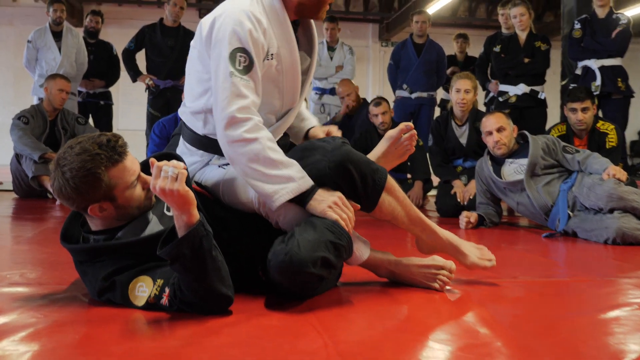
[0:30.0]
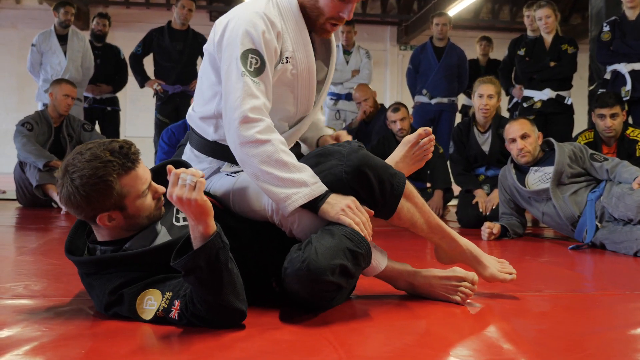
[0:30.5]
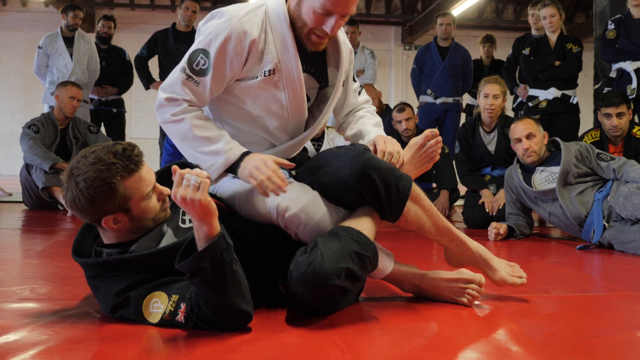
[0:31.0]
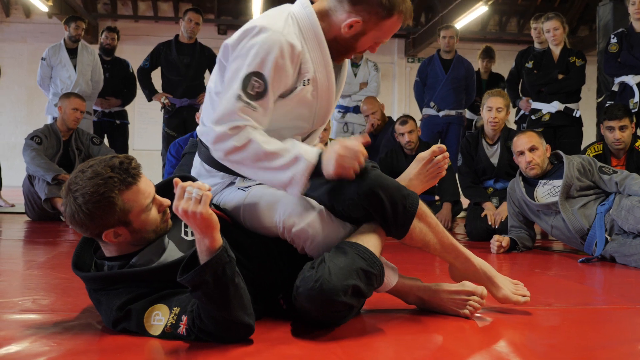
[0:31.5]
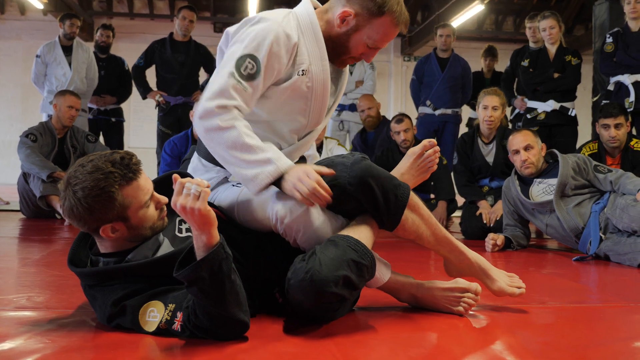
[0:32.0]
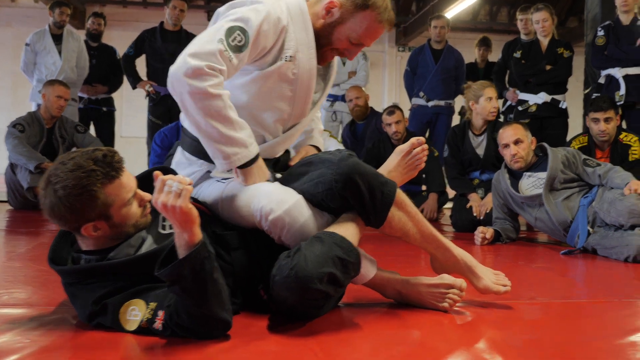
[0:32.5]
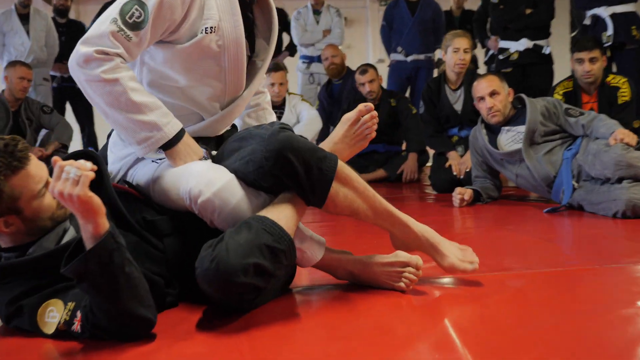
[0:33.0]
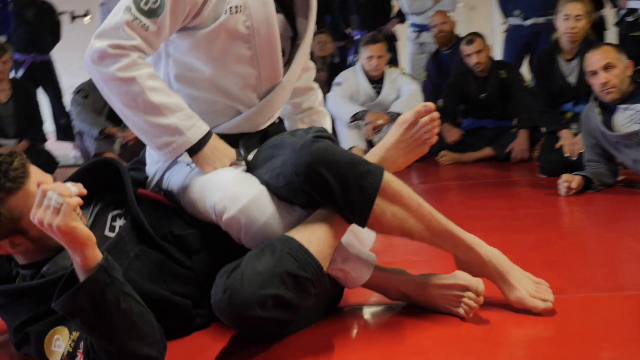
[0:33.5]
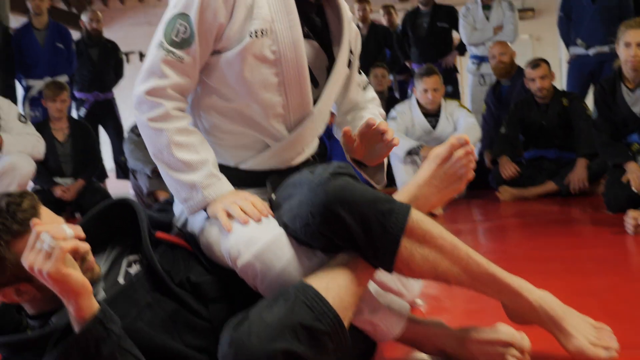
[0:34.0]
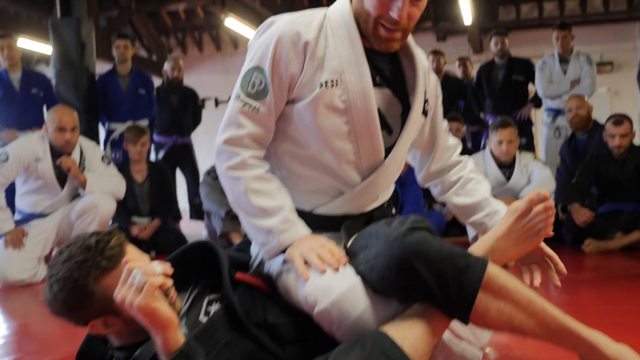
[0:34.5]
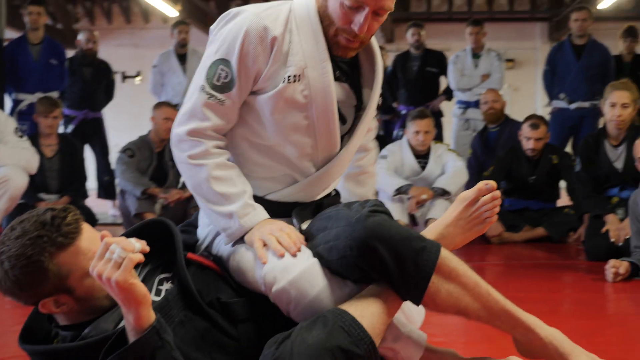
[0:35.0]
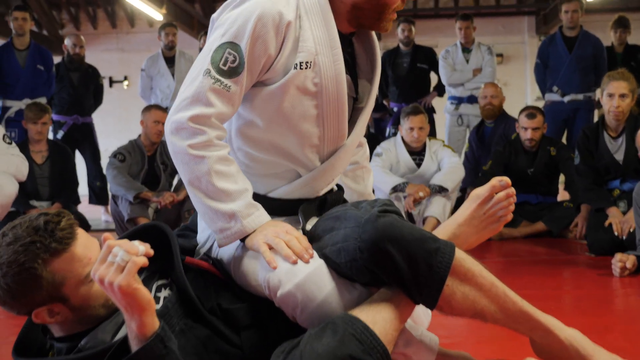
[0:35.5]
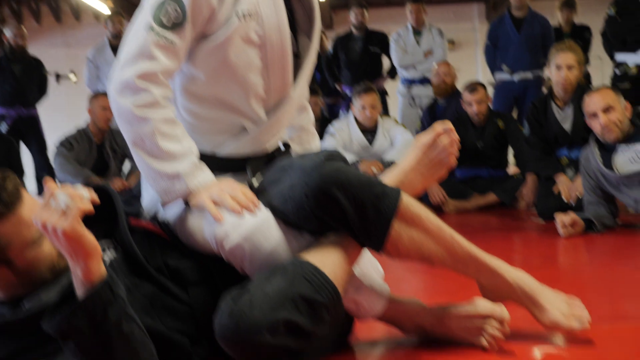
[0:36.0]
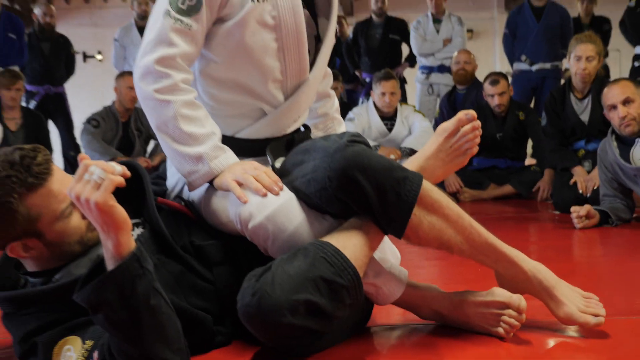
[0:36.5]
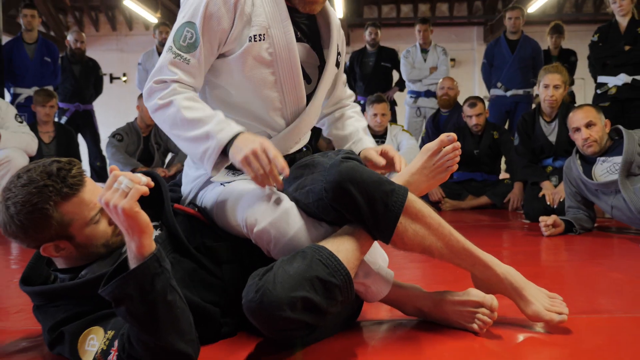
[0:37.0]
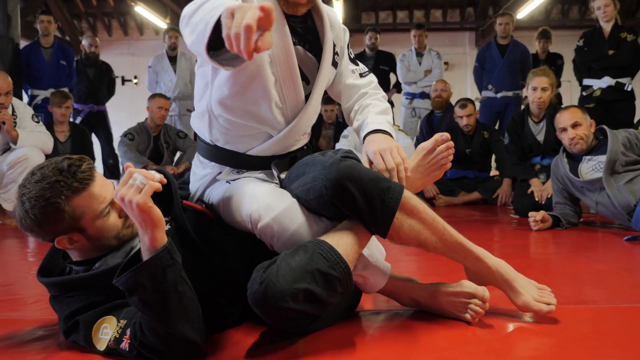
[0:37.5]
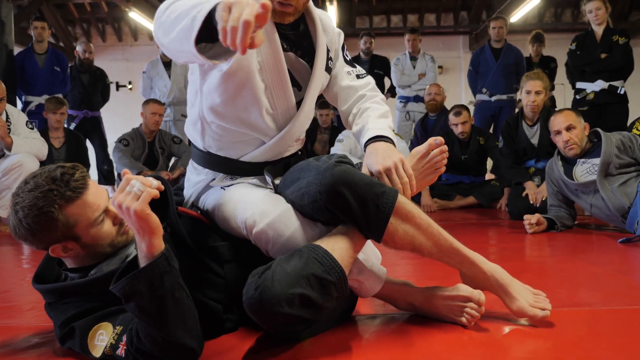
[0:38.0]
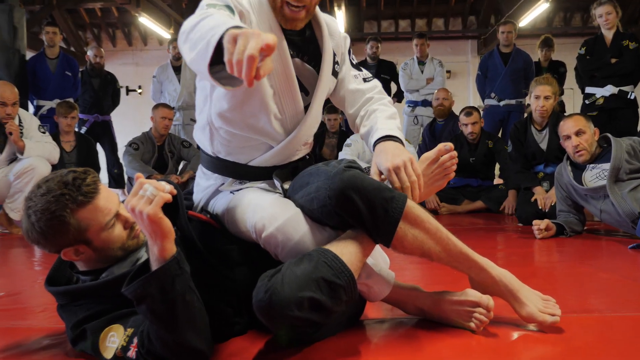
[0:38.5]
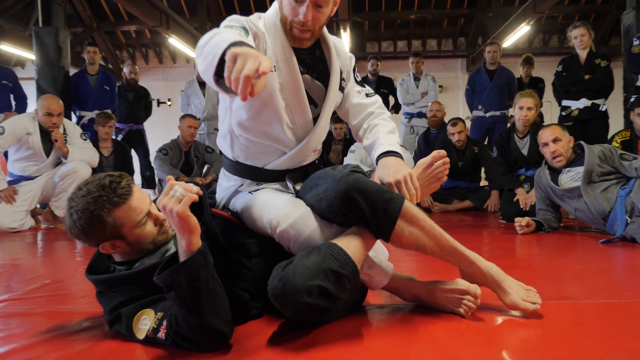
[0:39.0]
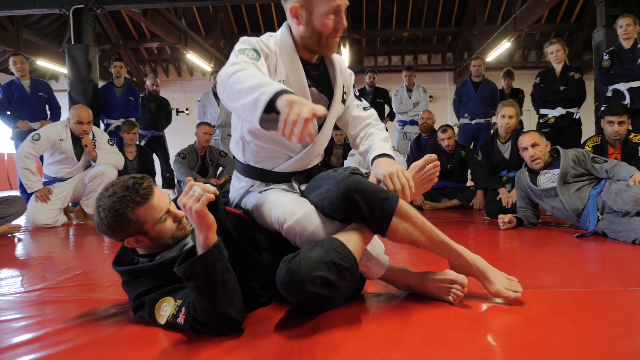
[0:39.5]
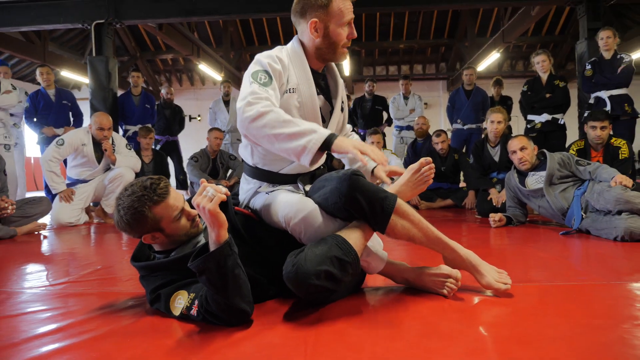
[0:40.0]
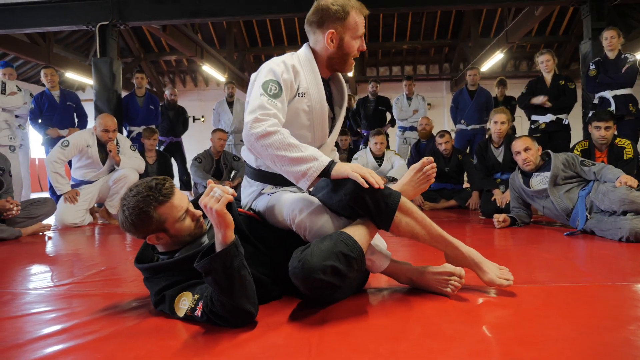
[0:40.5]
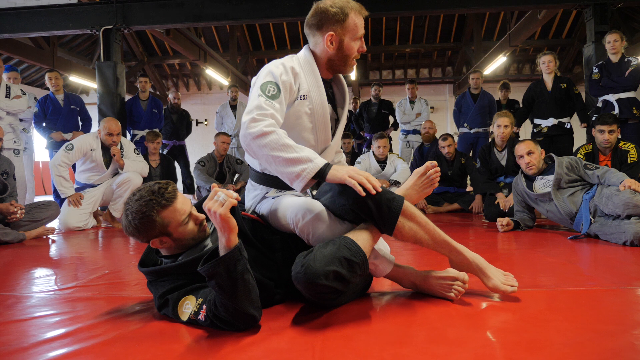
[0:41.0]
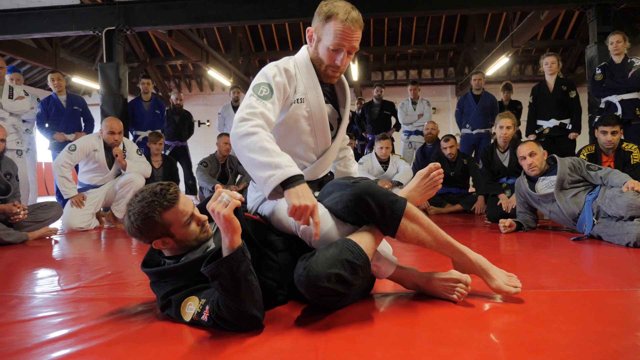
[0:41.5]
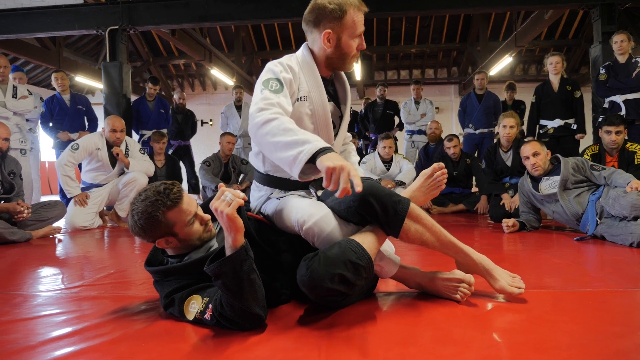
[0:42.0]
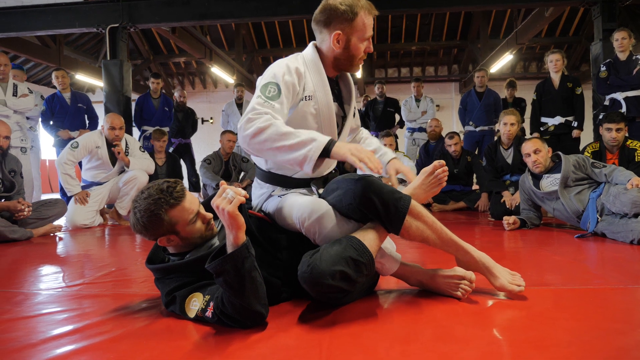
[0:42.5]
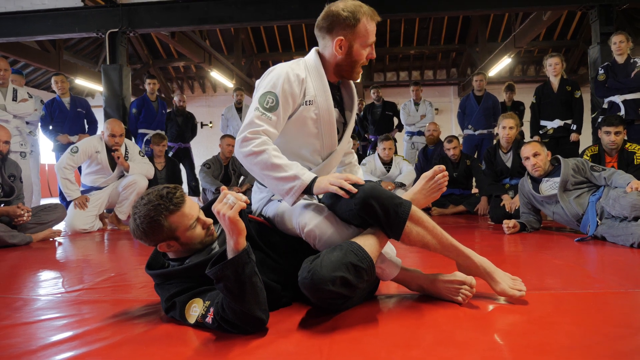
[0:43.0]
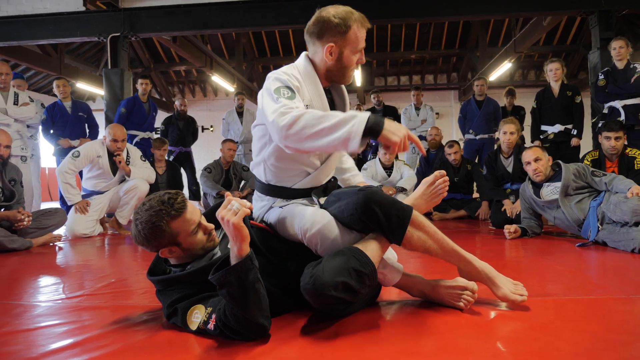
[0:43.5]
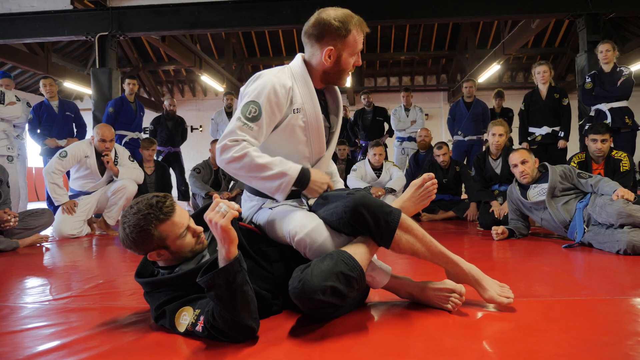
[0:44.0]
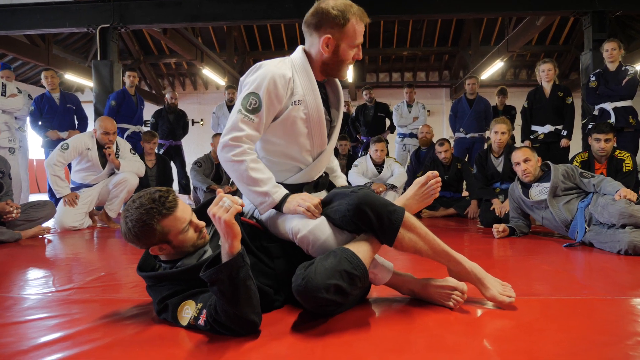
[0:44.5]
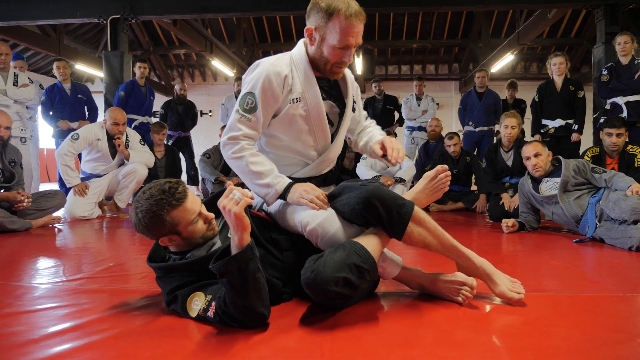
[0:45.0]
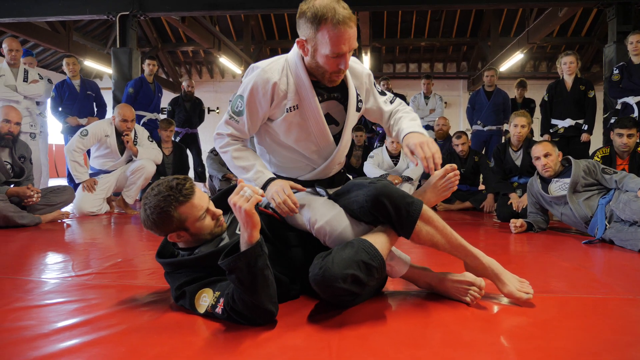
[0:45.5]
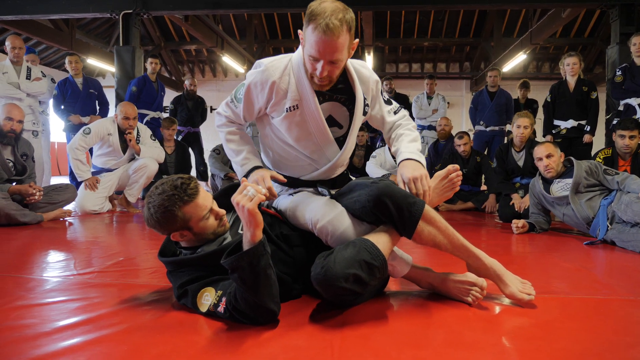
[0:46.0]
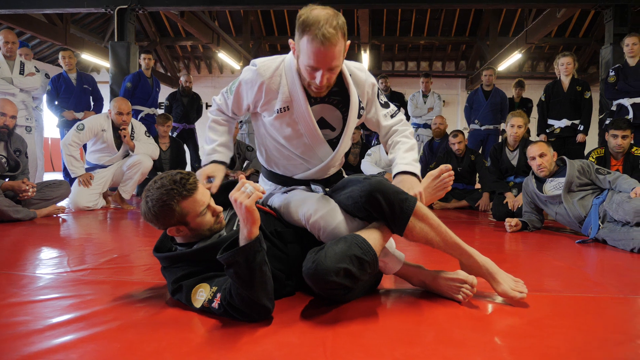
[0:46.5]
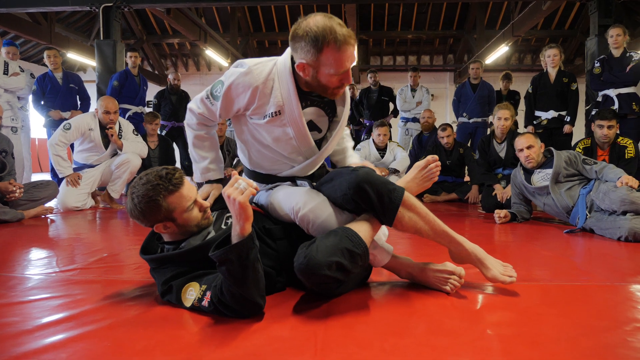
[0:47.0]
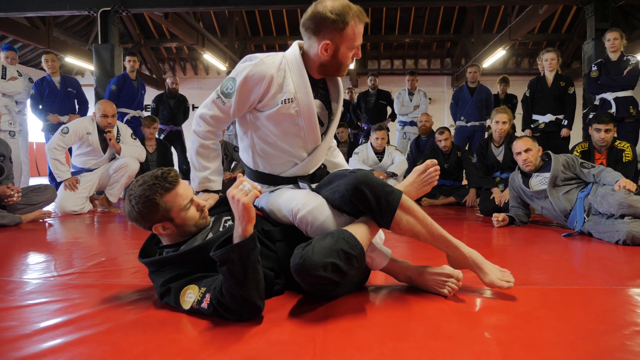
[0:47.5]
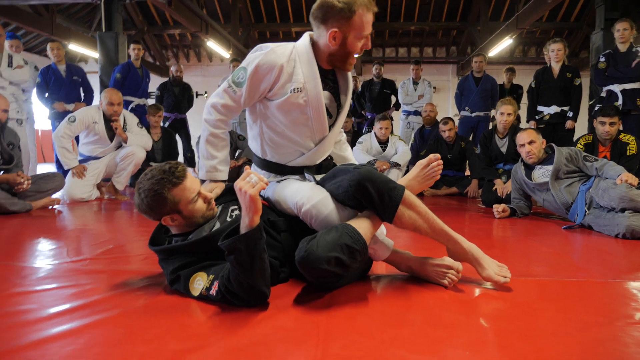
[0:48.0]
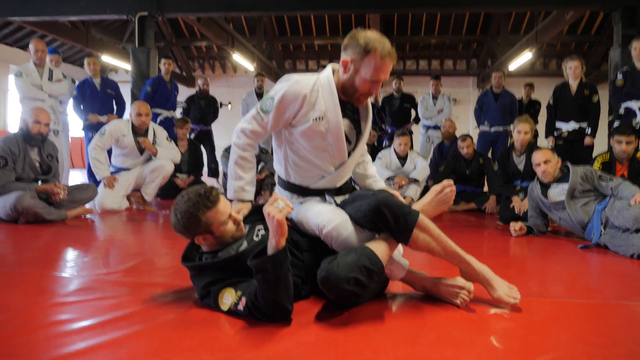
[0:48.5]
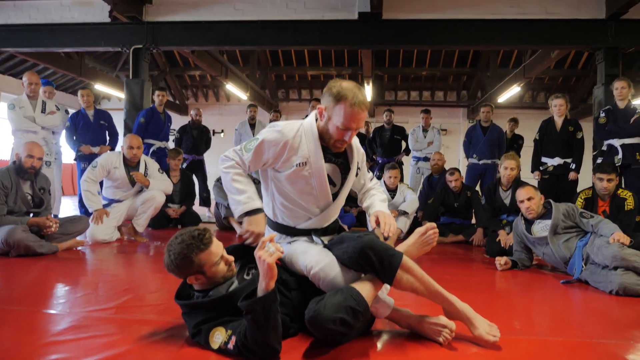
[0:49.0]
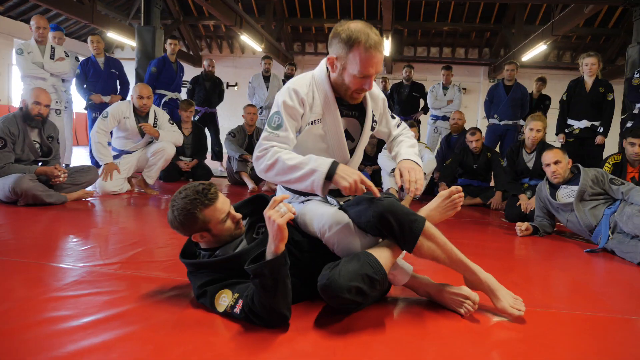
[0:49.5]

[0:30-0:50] The man in the white karate jumpsuit has his hip kind of on the chest of the man on the bottom in the black karate jumpsuit, their legs locked. He looks around and plants his fists on both of his thighs, then pats a thigh, apparently his right one. He looks at the others in the circle around the display and points at the camera with his right hand, brings his hands back down, makes a waving-off sign, points at the other man's leg again and points back toward the camera, making many gestures as he explains the leg lock. The man in black has both of his legs crossed so that his calves make an X around the other man's right leg, and they stay kind of locked in this position.